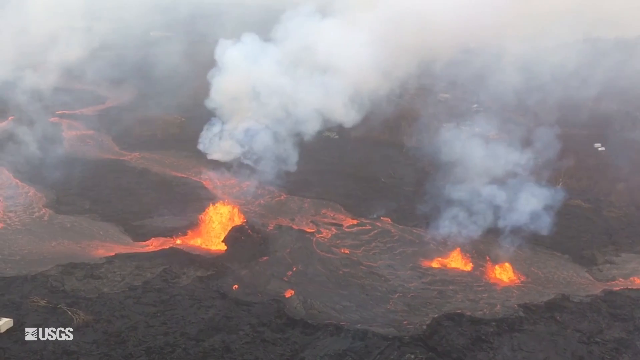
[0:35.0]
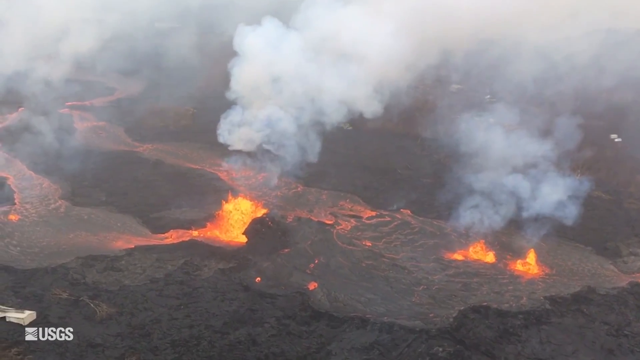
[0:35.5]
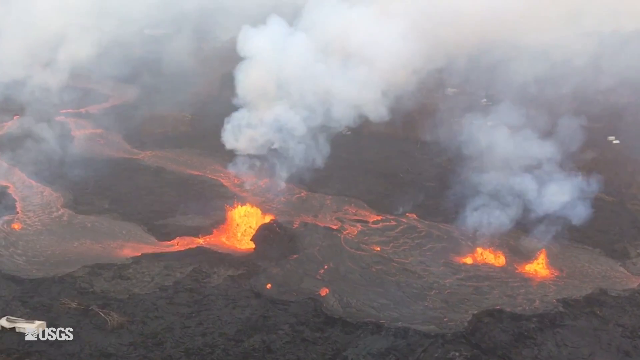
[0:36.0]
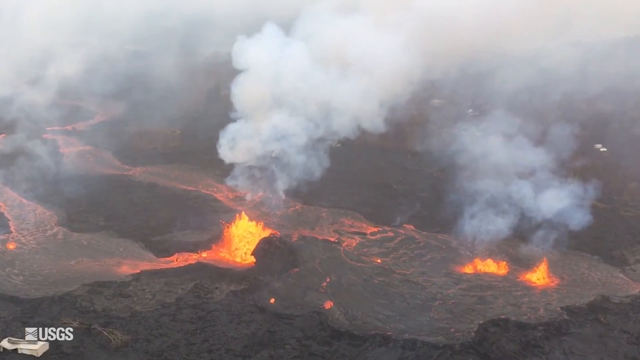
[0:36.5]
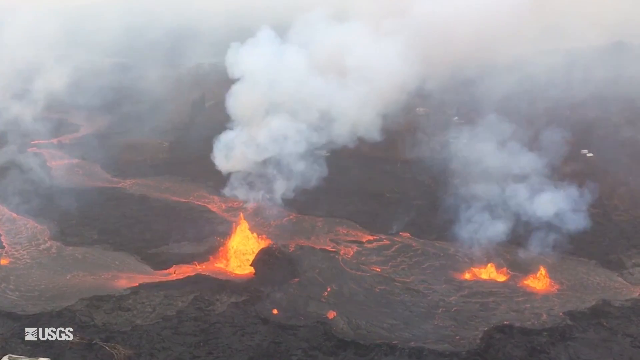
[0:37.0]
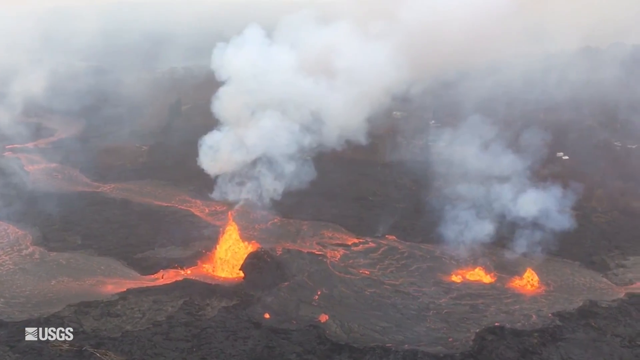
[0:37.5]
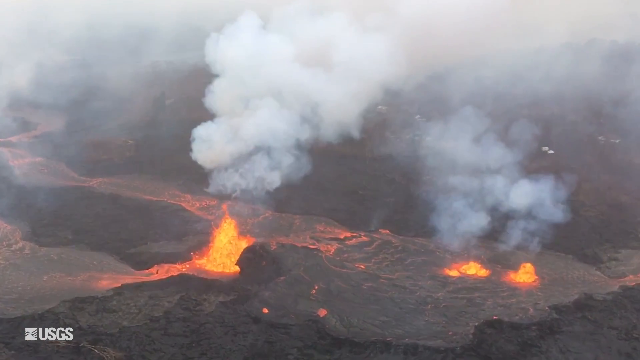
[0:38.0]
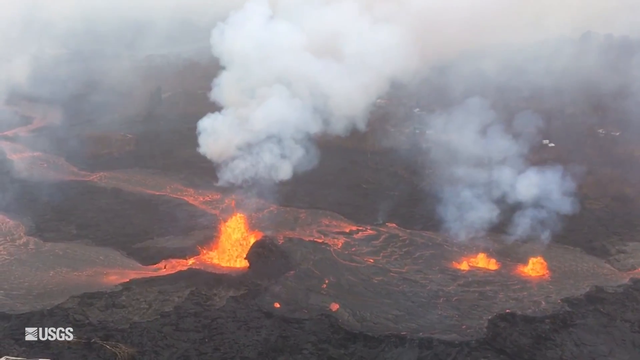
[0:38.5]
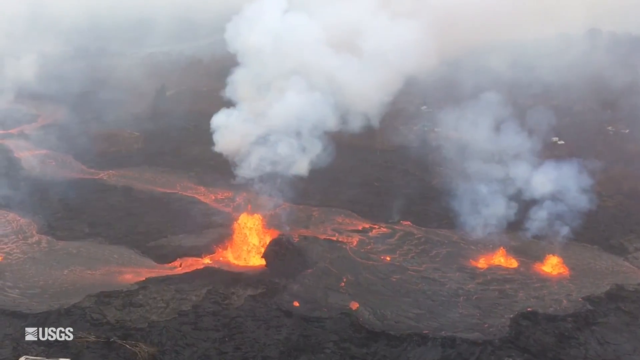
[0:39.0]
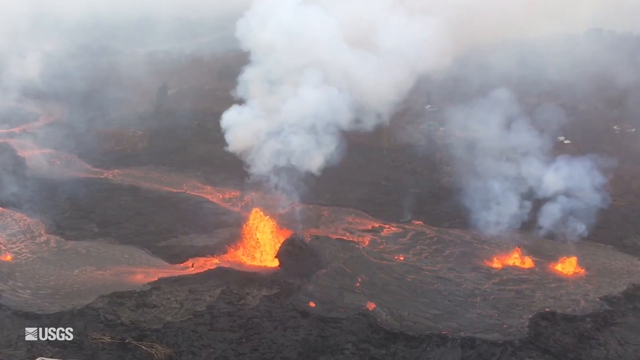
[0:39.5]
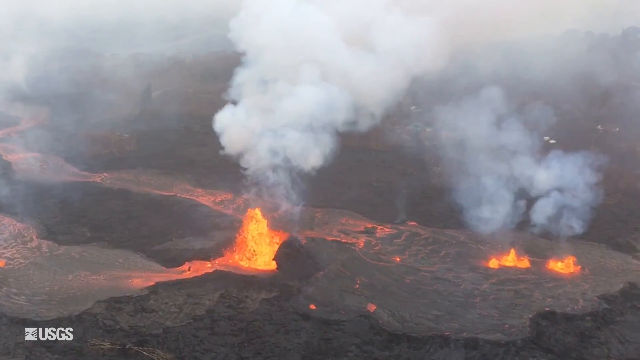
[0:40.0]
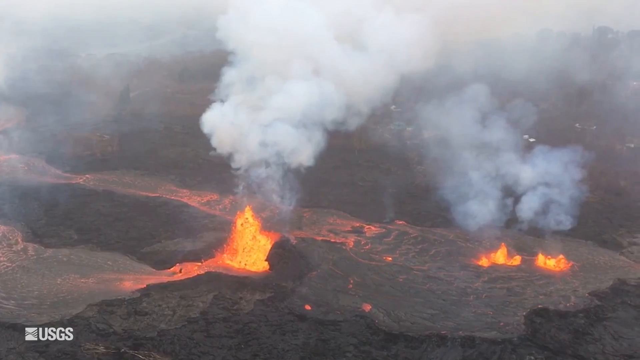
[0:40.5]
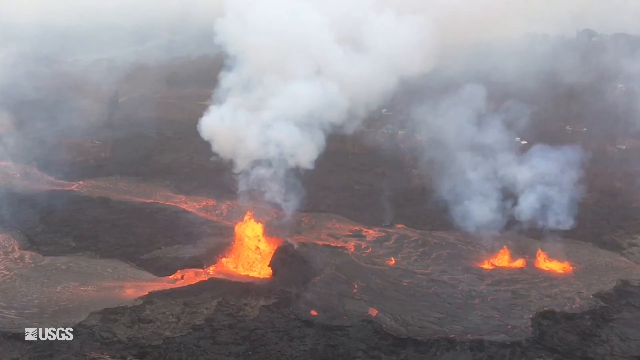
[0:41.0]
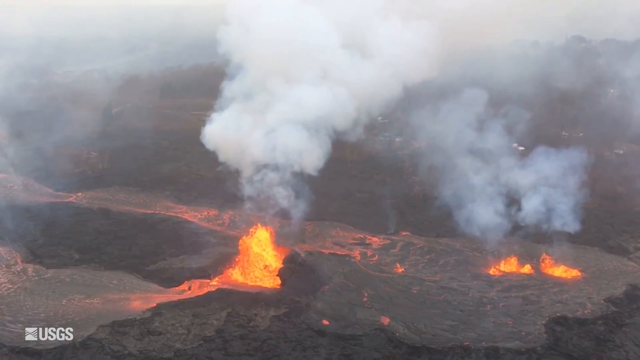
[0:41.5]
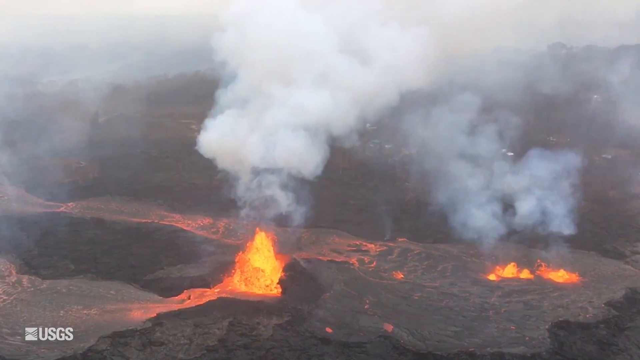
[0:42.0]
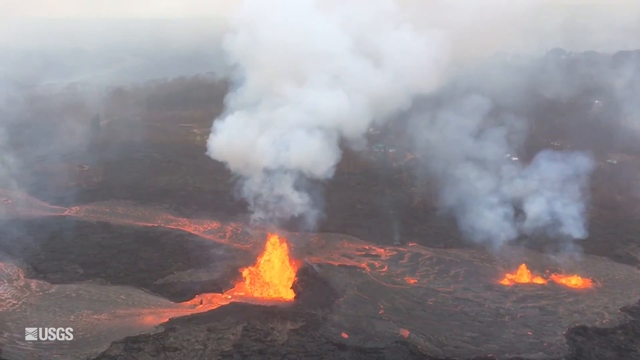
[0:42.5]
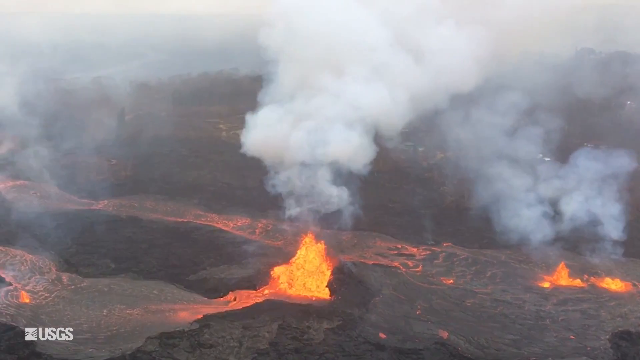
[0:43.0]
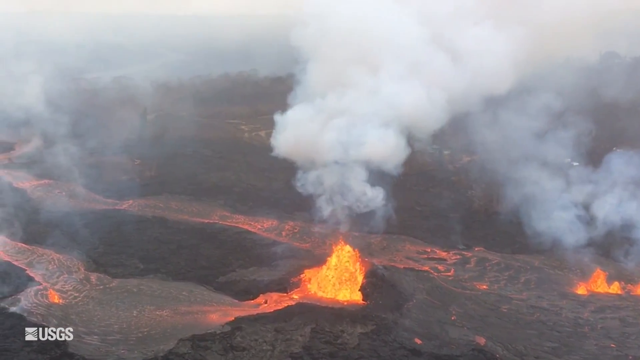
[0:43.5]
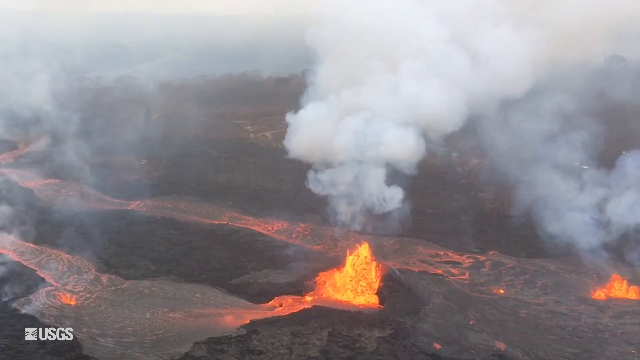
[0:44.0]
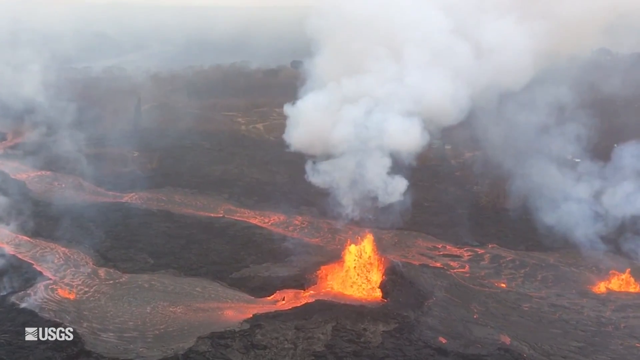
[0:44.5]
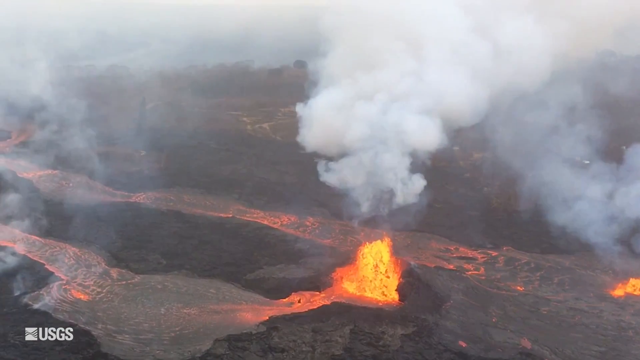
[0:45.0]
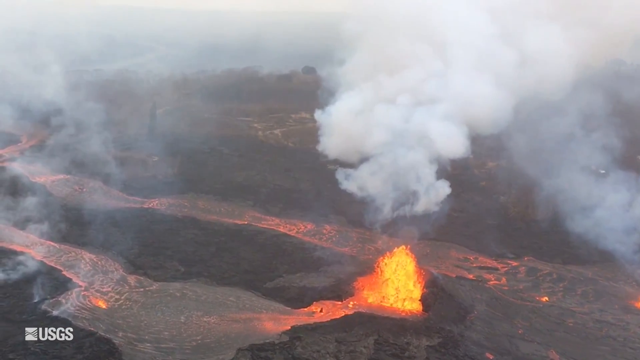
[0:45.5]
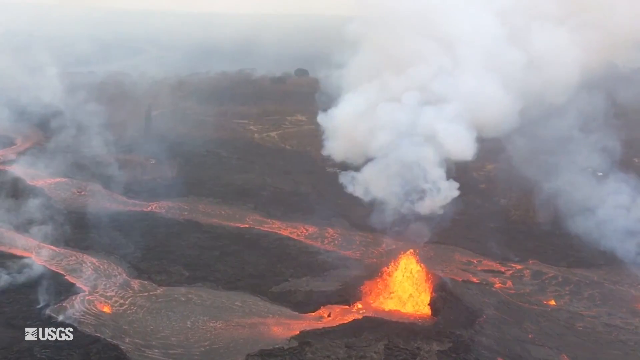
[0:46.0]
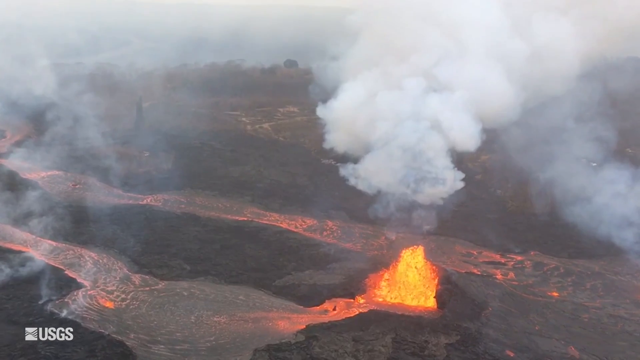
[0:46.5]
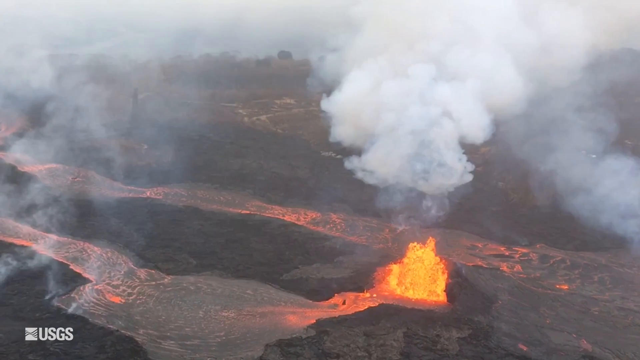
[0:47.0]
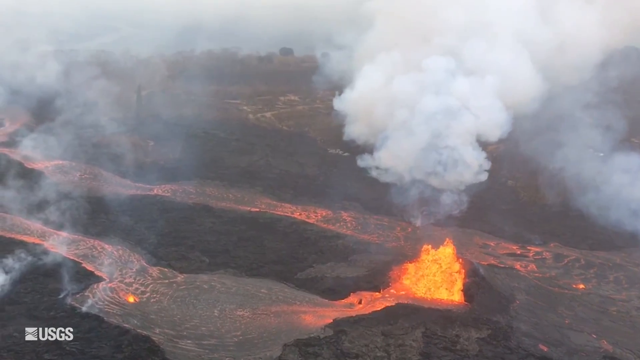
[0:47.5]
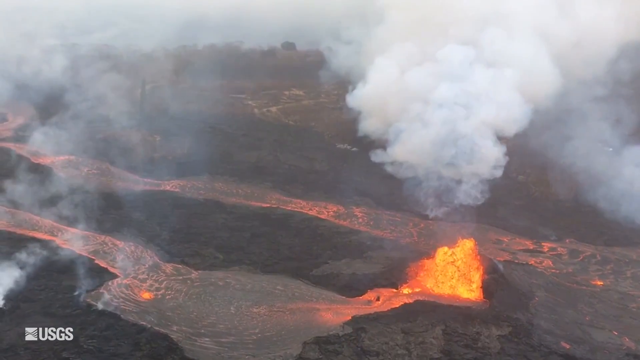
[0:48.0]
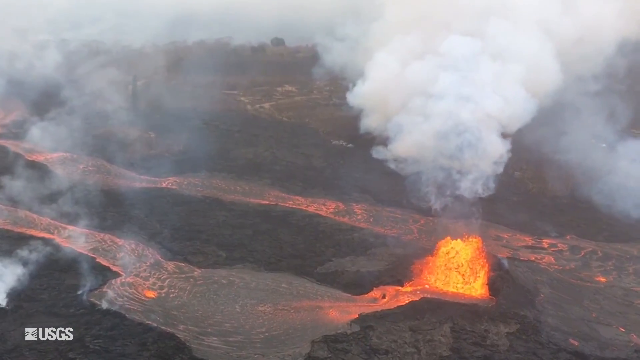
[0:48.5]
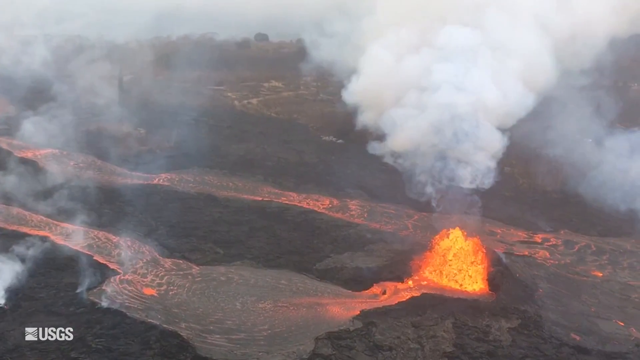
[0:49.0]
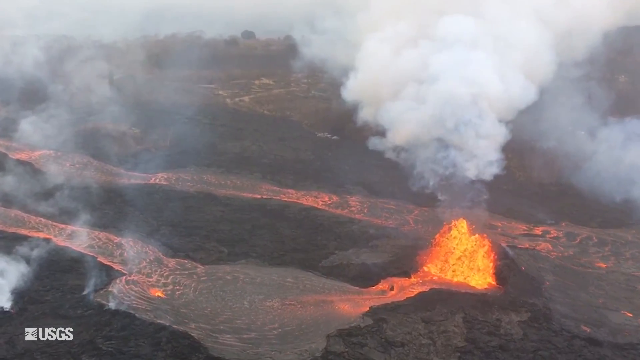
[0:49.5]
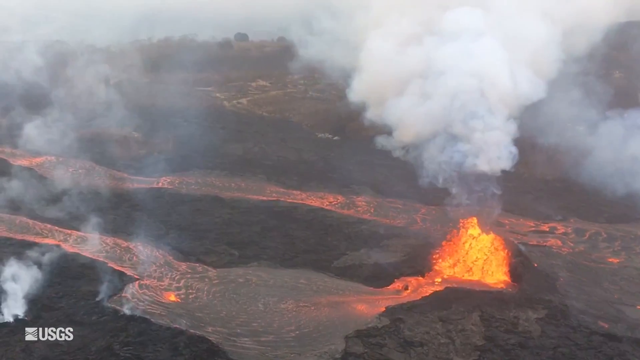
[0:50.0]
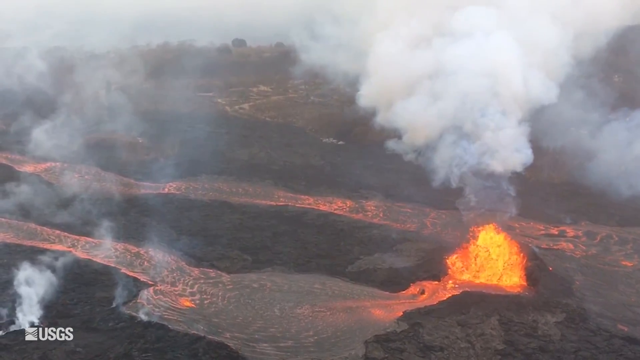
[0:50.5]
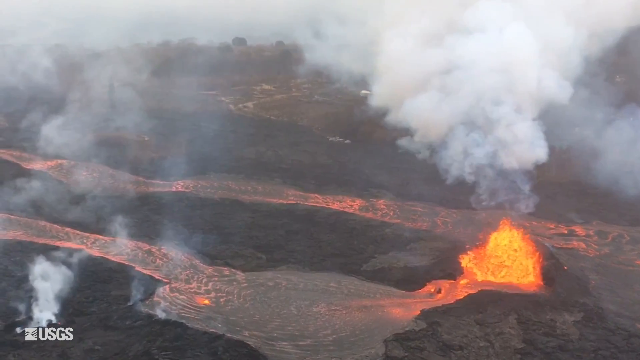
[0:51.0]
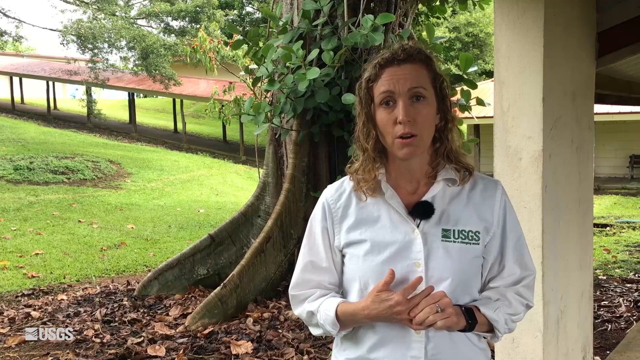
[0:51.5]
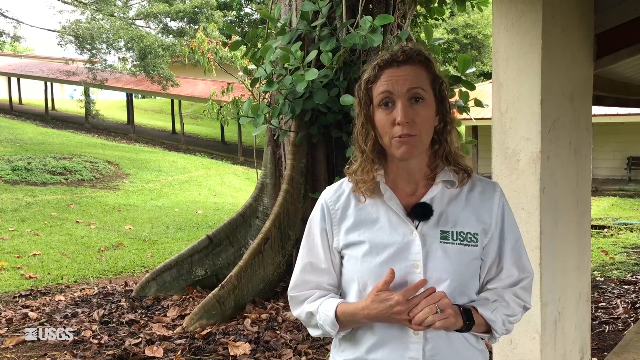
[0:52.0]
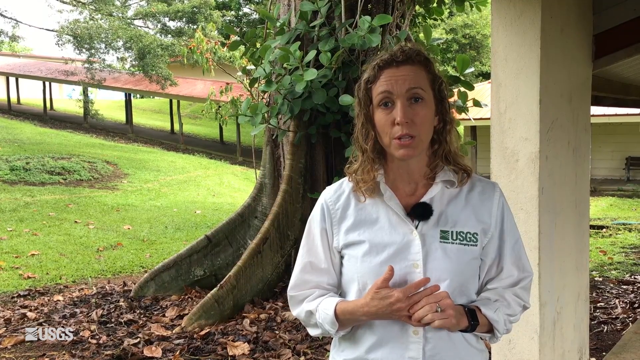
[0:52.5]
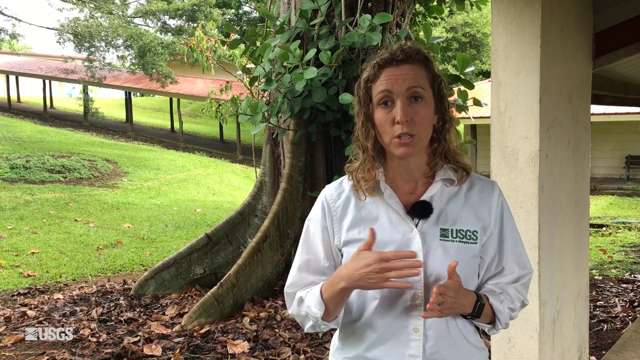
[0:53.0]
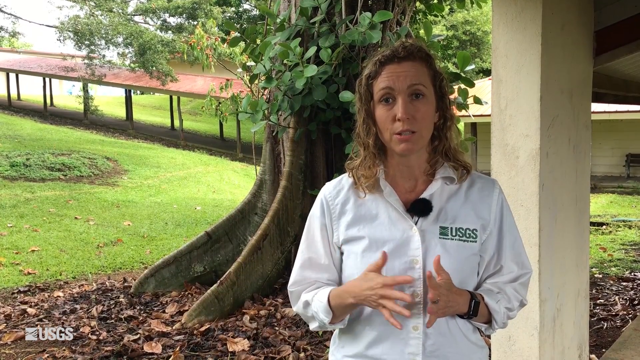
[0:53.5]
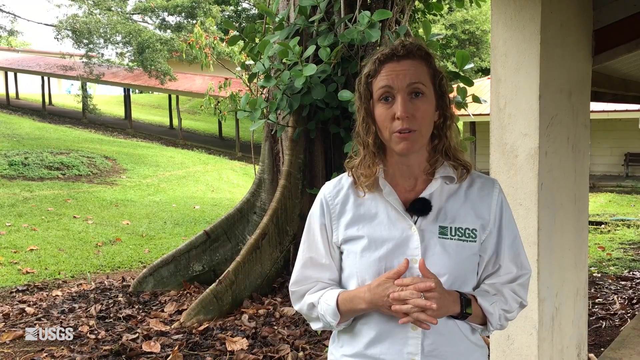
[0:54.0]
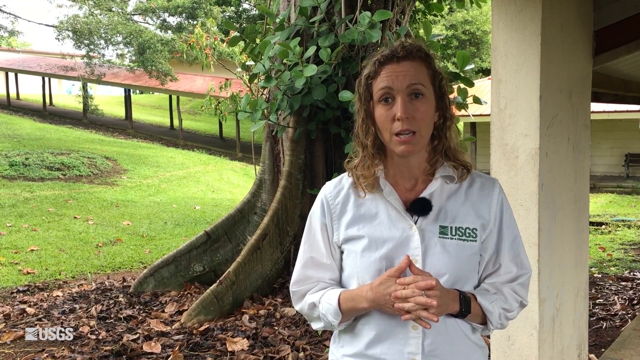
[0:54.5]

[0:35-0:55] An aerial shot shows the sources of lava in the eruption, then the large river of lava it has caused. Towers of steam and smoke come from the lava, and volcanic rock directs the lava's path, making it look like a river. There appear to be two rivers of lava, with three different sources of lava coming up from the ground and down the side of the mountain. A USGS watermark is in the lower left-hand corner. The geologist speaks outside against a background of green grass, with what looks like a pavilion kind of structure, and she is next to a tree.